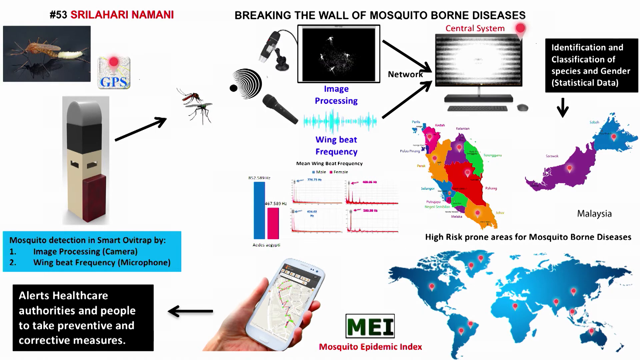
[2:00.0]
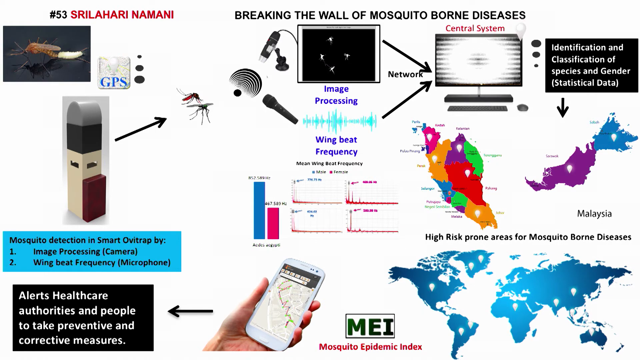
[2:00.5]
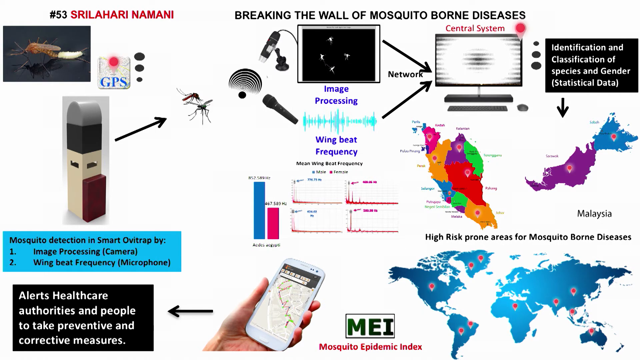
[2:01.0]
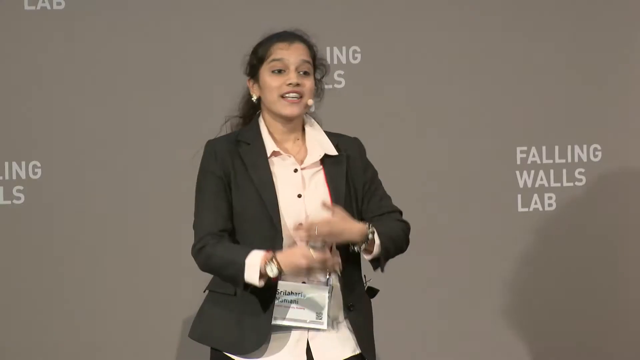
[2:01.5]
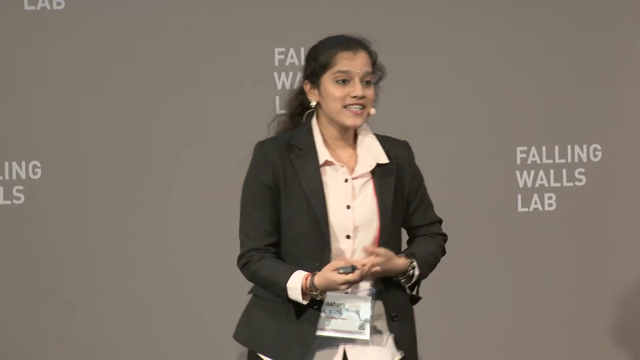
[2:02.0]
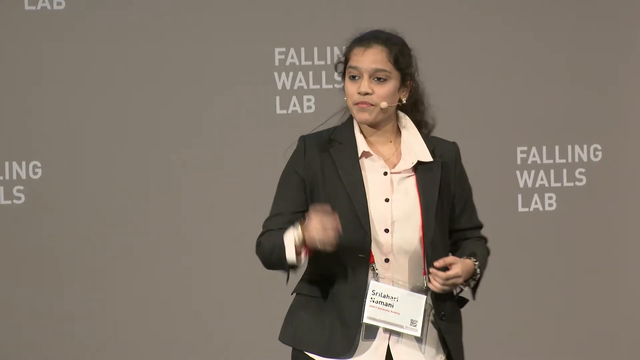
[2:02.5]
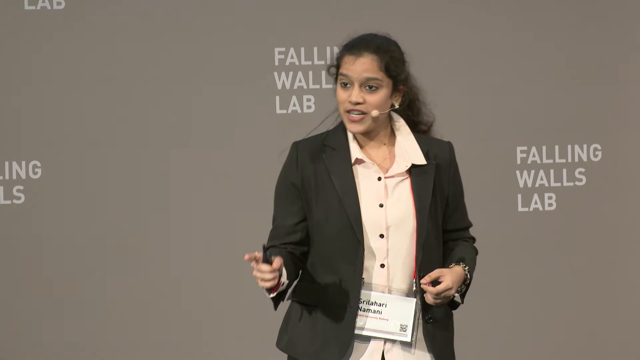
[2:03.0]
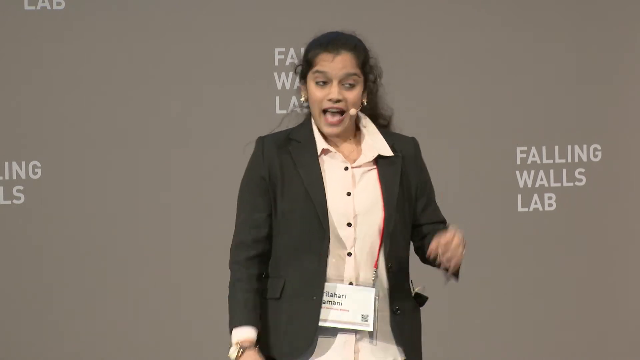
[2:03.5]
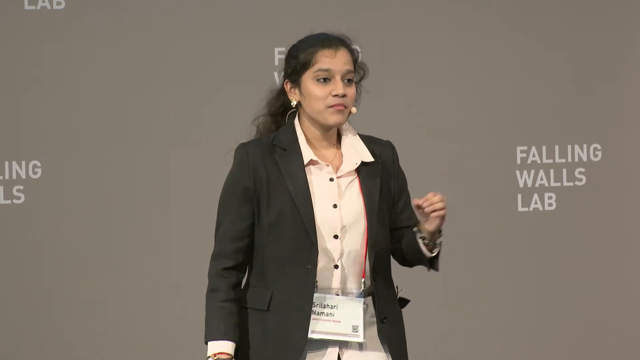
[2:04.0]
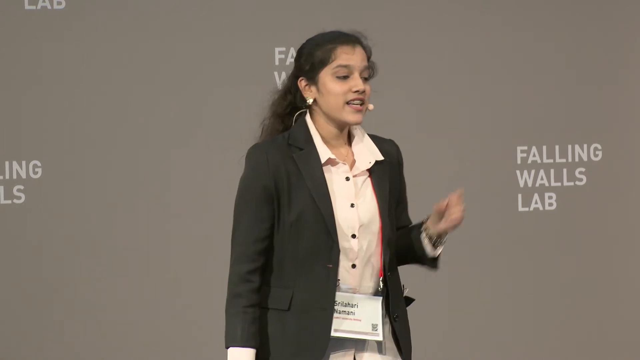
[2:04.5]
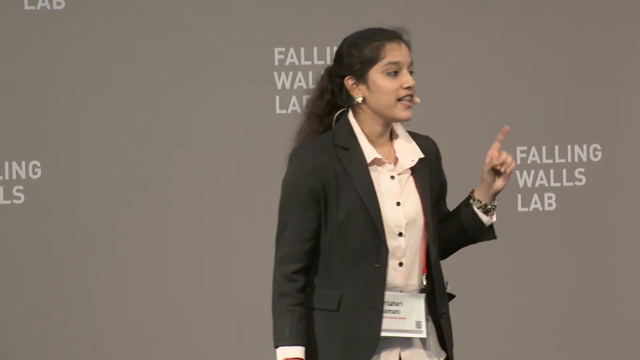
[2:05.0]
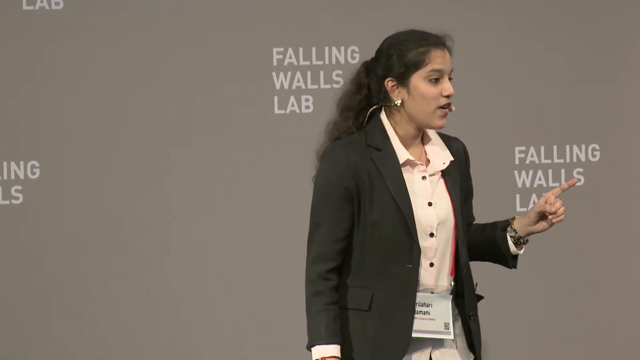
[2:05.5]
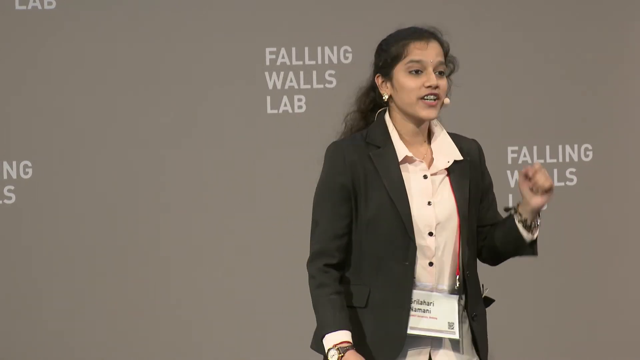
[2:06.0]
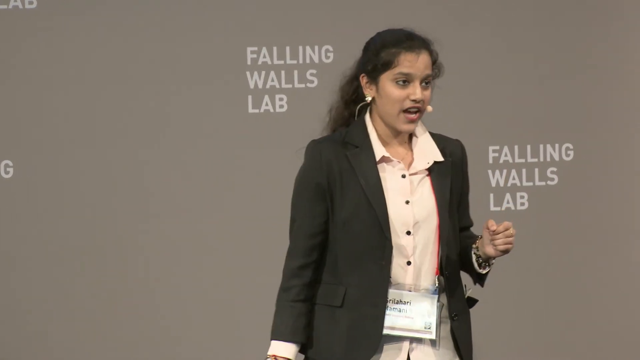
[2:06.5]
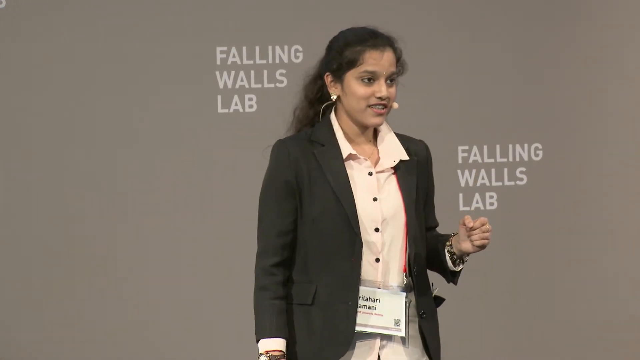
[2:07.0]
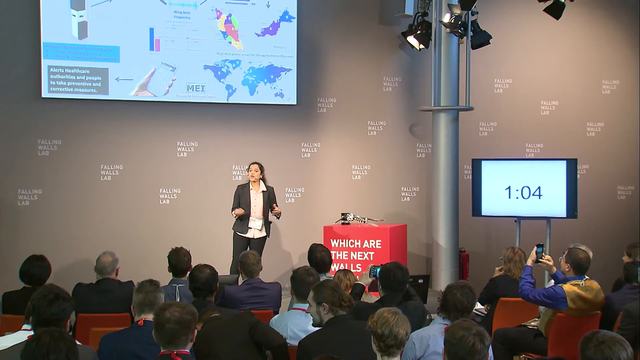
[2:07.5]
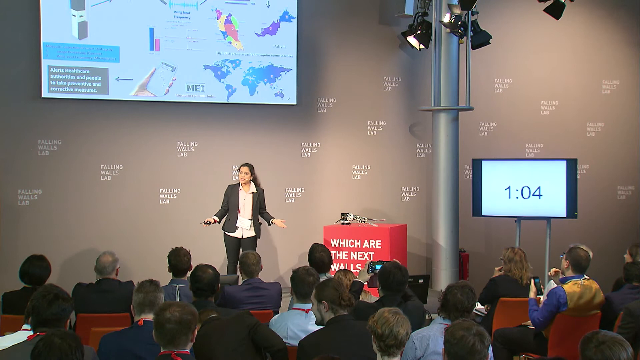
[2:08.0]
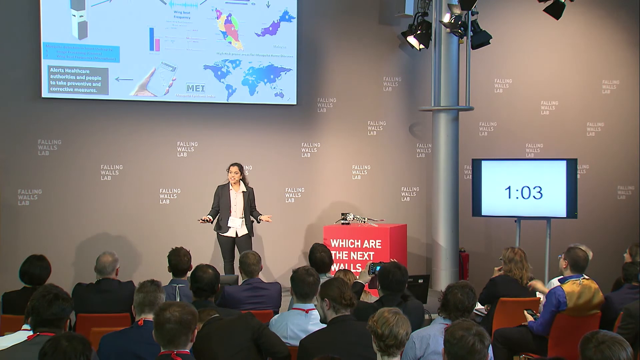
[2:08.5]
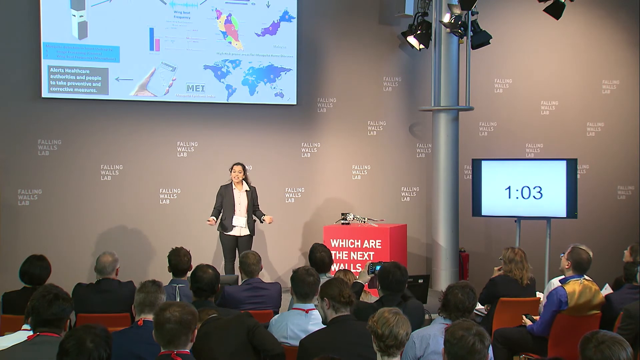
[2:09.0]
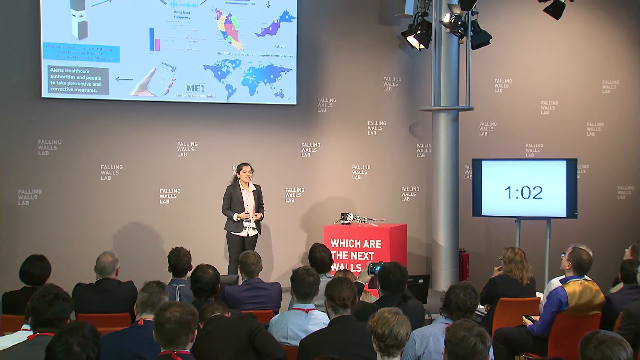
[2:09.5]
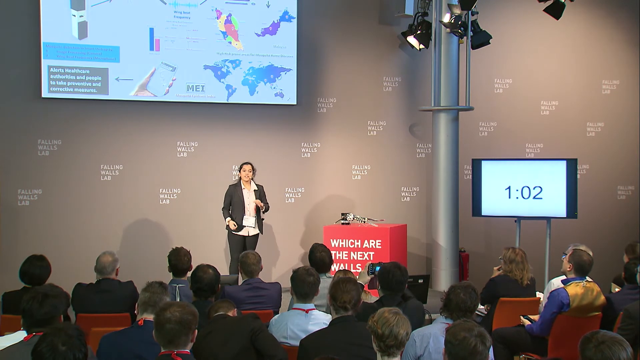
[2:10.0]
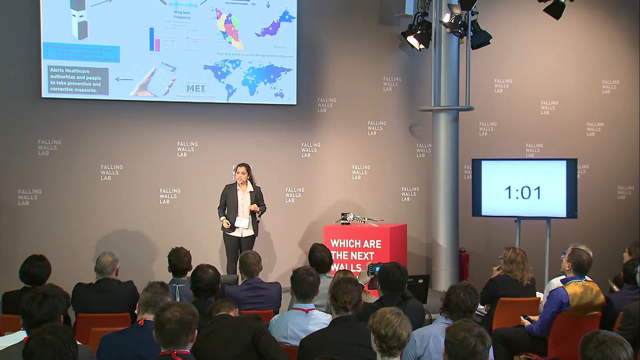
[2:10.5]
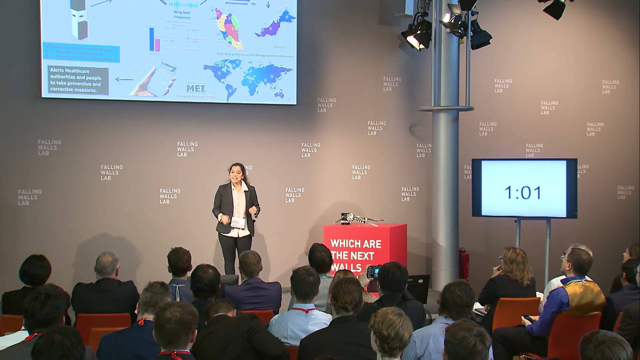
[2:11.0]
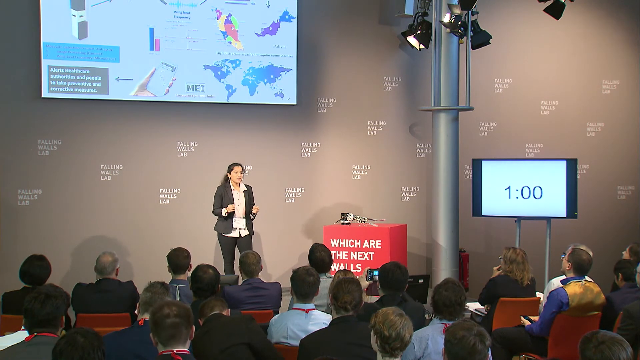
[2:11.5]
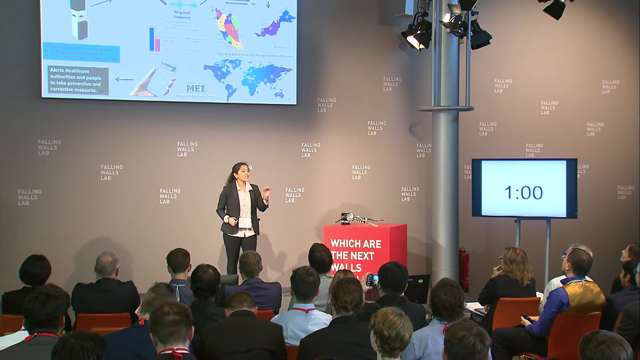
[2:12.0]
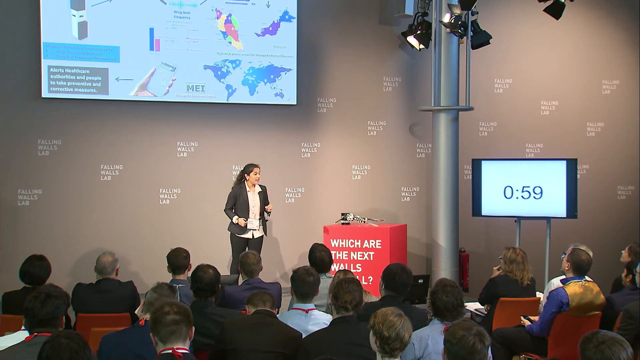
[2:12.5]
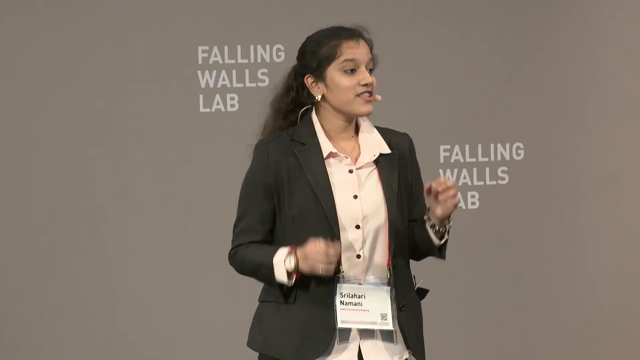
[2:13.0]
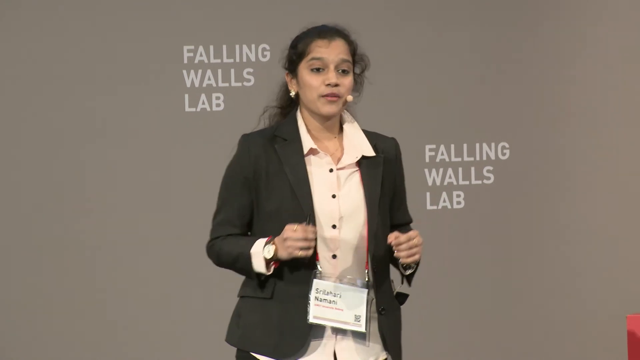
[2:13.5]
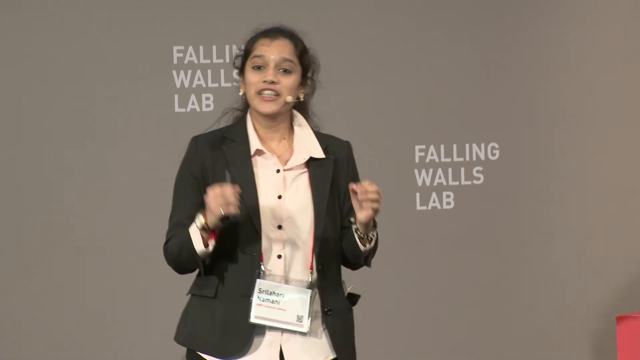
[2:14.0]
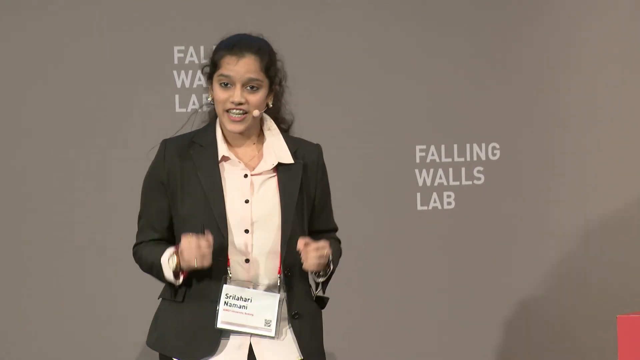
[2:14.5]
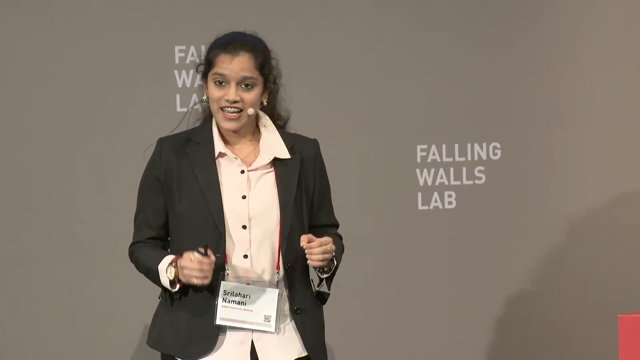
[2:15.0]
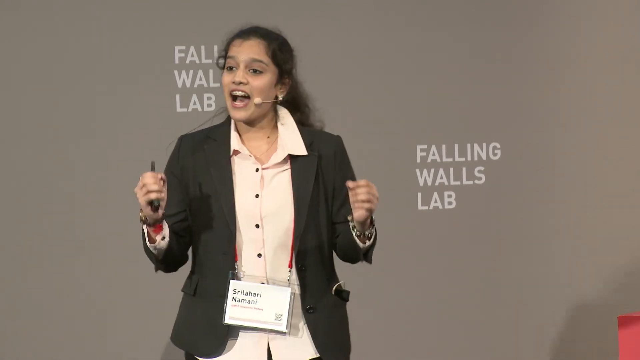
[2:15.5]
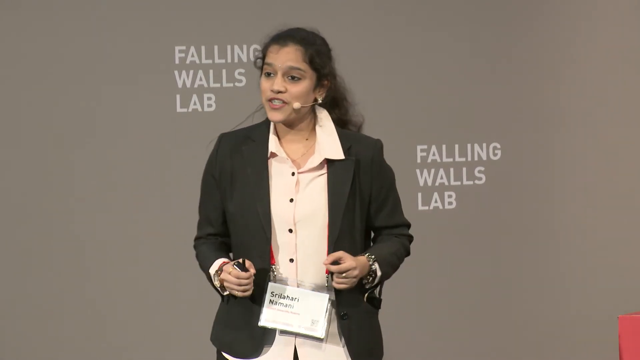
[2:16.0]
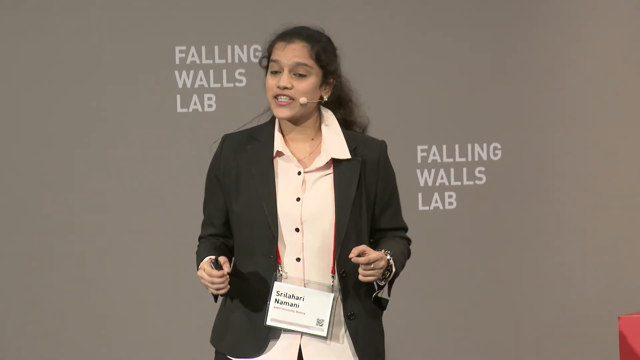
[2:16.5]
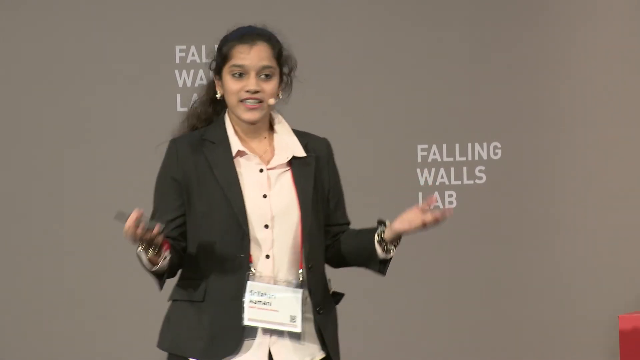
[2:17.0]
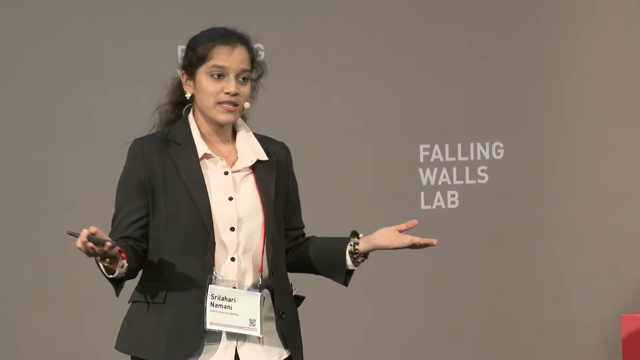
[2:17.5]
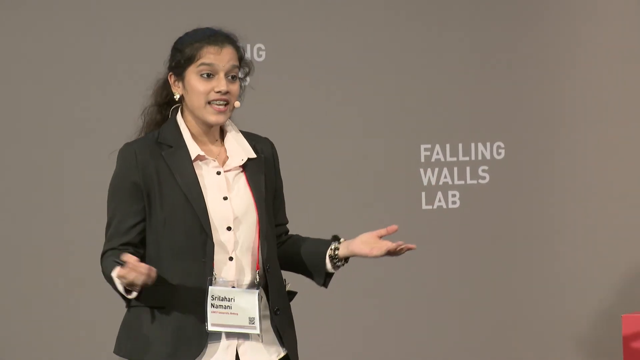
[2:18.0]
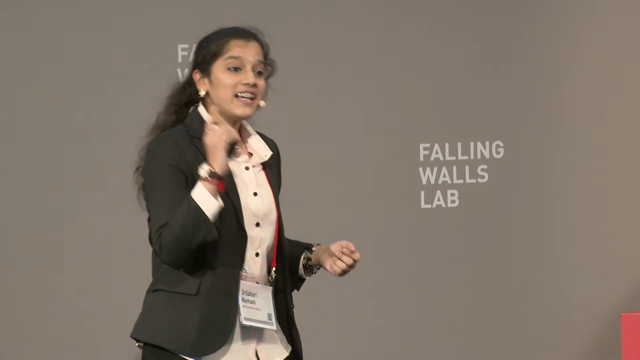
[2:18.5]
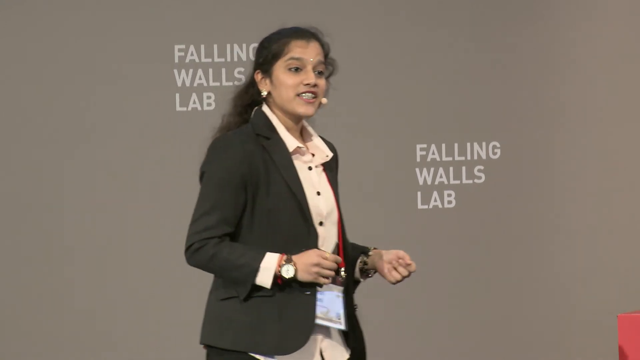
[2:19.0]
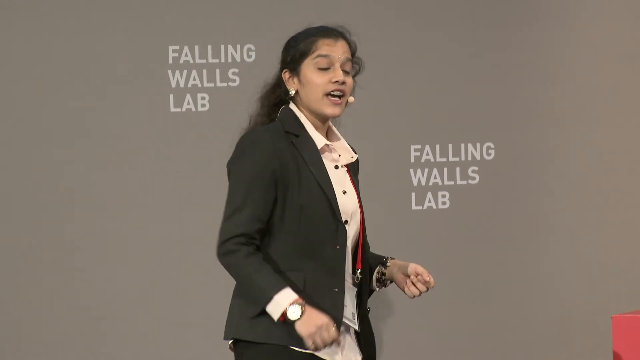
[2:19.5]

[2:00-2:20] The slide also shows a microphone pointed at the little dot, whose black circles now emanate toward the right. There appears to be another microphone strapped to a stand, with a small cable leading to a black rectangle with a few white spots on it. Below that, purple text reads "image processing". To the right of the microphone are light blue waves, with "wing beat frequency" written below them. Two black arrows point to a central system screen. Below "wing beat frequency" is a bar graph in which a dark blue bar is taller, about double the height of a pink bar. To the right of those two bars are four graphs whose text is too small to read. Three maps are shown. One shows countries colored pink, orange, red, purple, green and blue, though the region is unclear. Another is a larger picture of Malaysia, part purple and part blue. Above it, a black text box with white lettering reads "identification and classification of species and gender", followed in white by "(statistical data)", and a small black arrow points toward Malaysia. Below Malaysia and the multicolored map, text reads "high risk prone areas for mosquito borne diseases", above a world map with red location pointers.